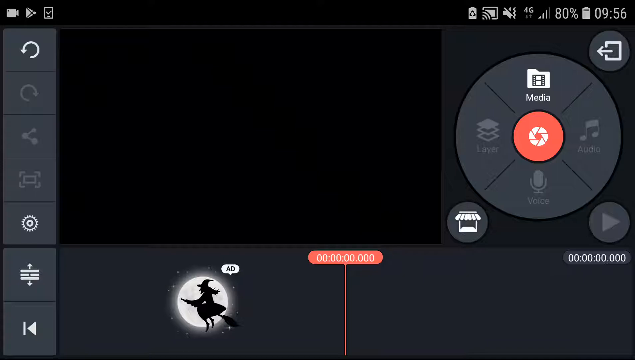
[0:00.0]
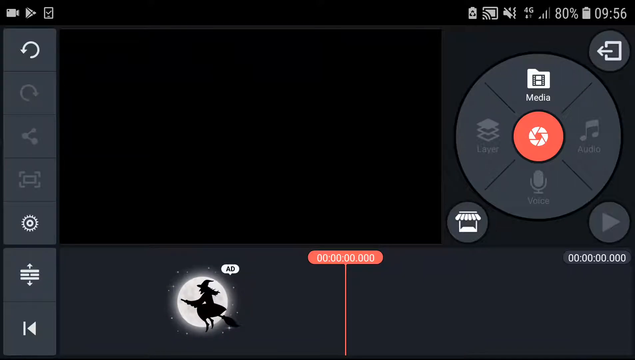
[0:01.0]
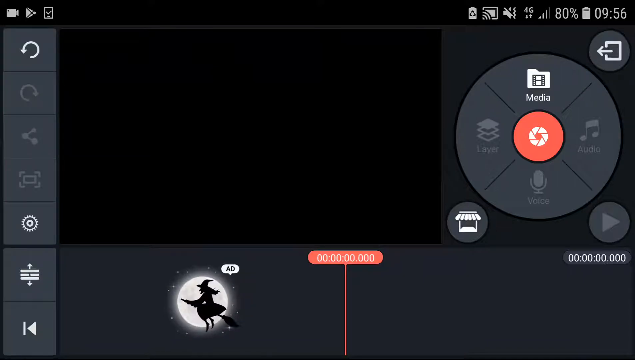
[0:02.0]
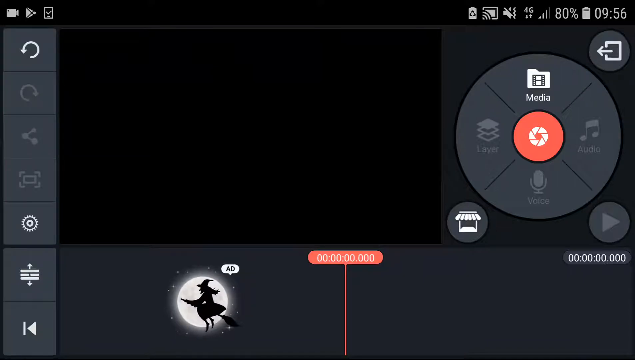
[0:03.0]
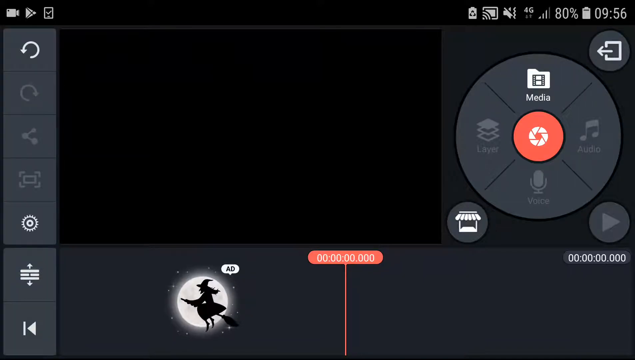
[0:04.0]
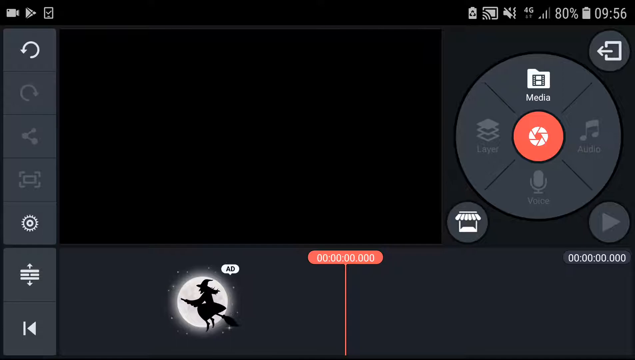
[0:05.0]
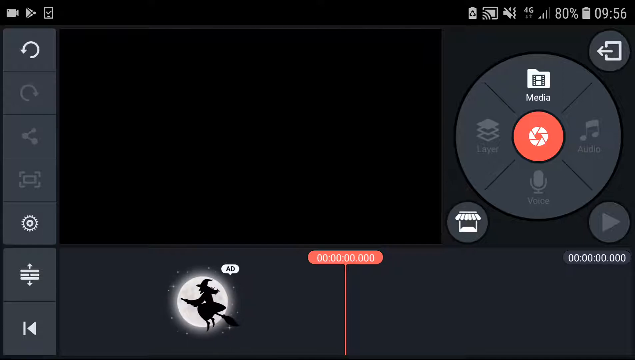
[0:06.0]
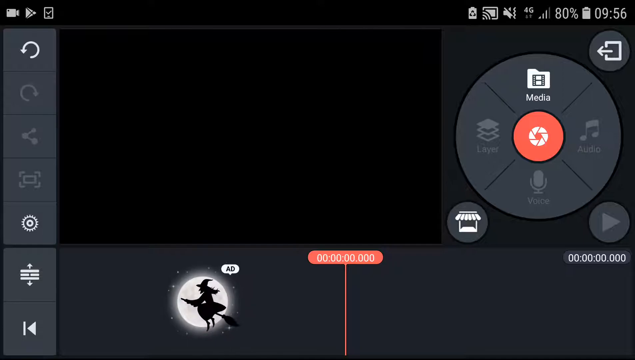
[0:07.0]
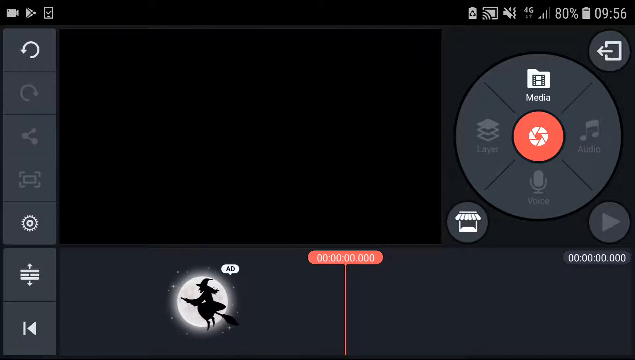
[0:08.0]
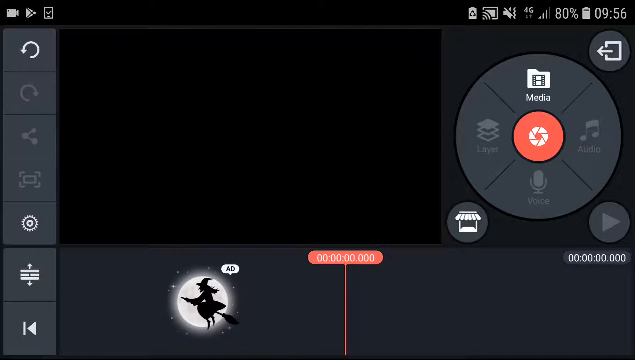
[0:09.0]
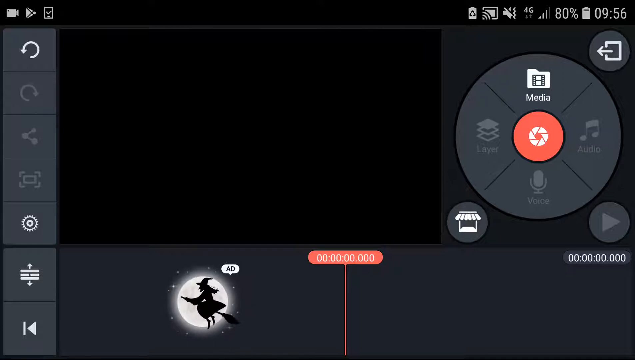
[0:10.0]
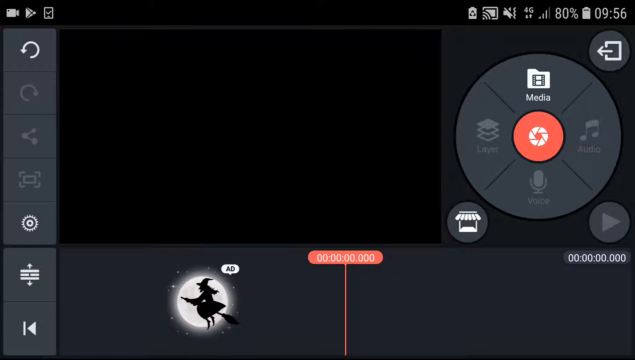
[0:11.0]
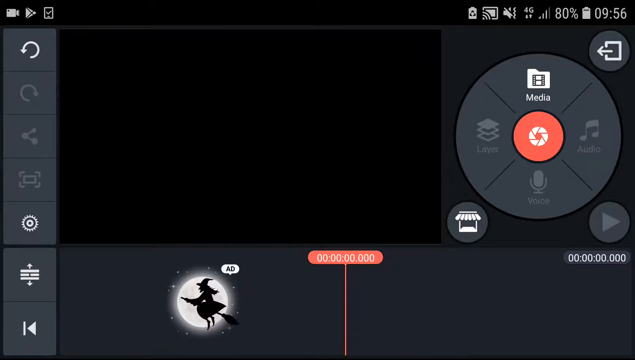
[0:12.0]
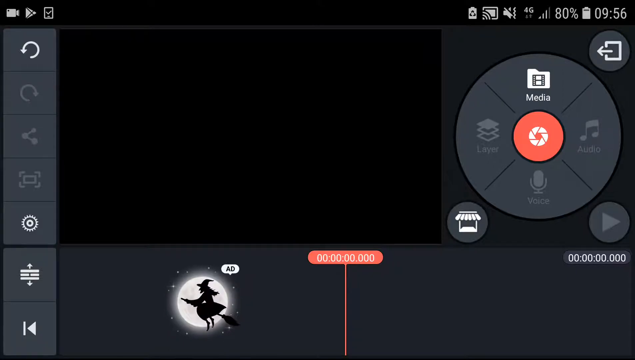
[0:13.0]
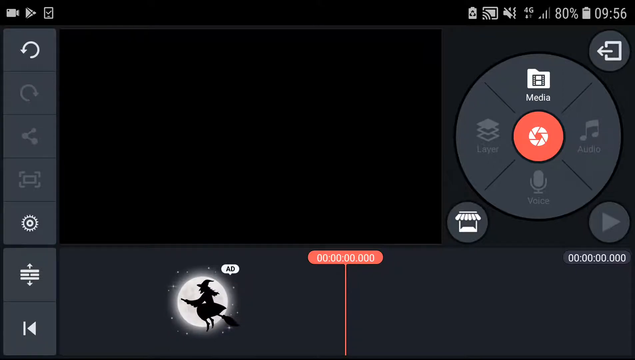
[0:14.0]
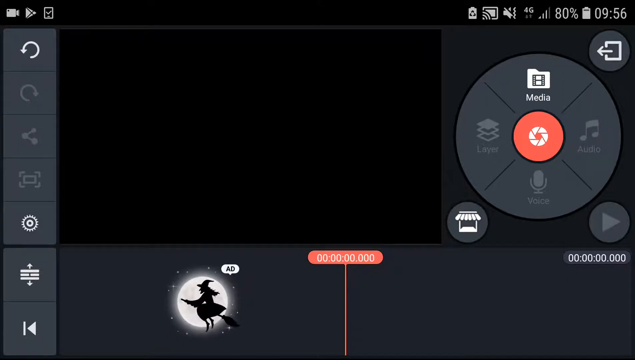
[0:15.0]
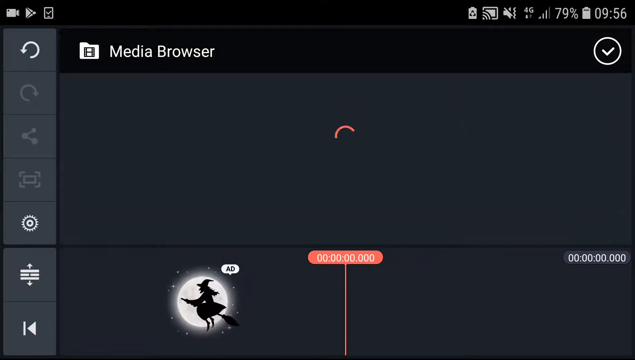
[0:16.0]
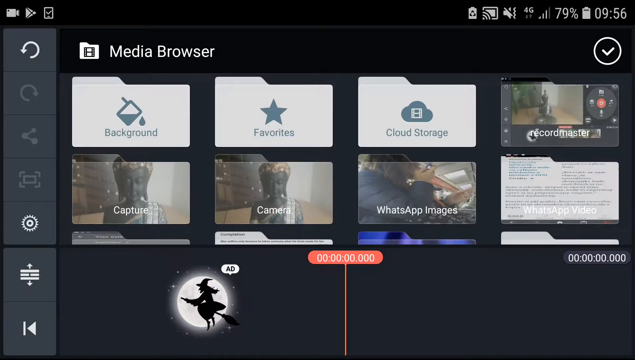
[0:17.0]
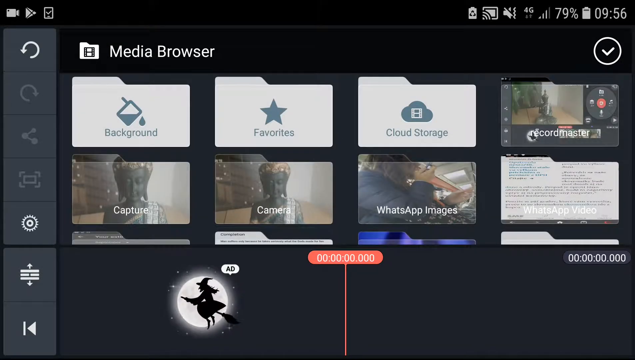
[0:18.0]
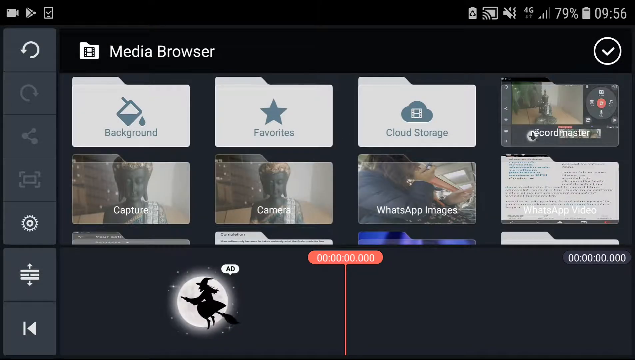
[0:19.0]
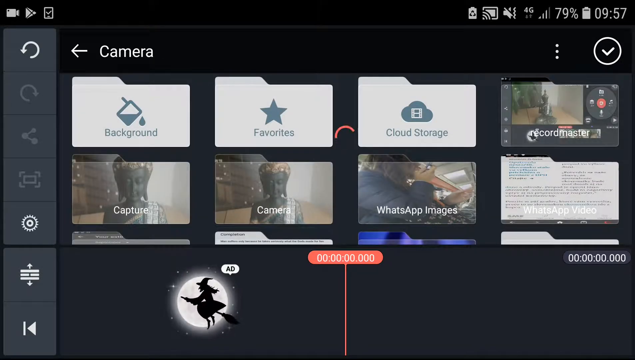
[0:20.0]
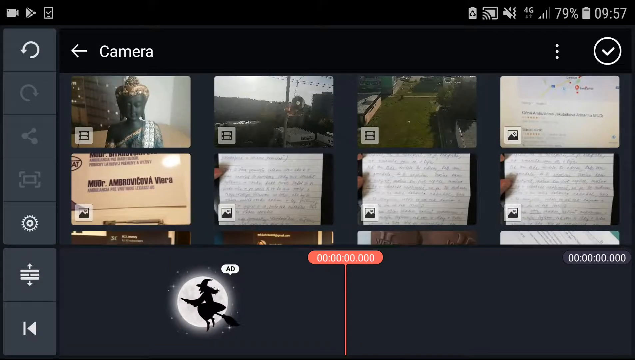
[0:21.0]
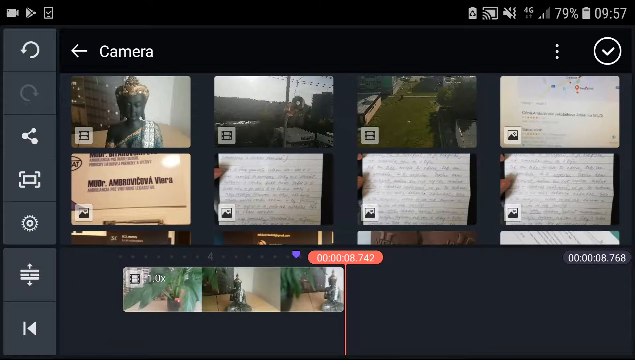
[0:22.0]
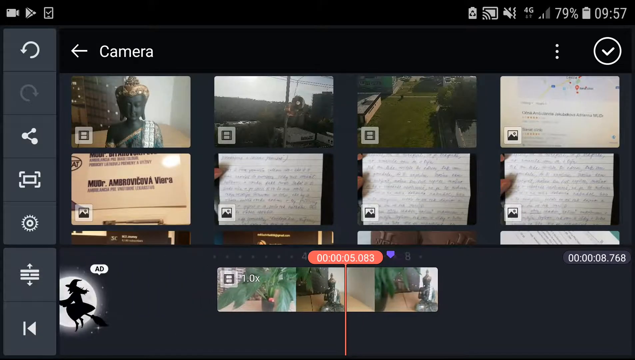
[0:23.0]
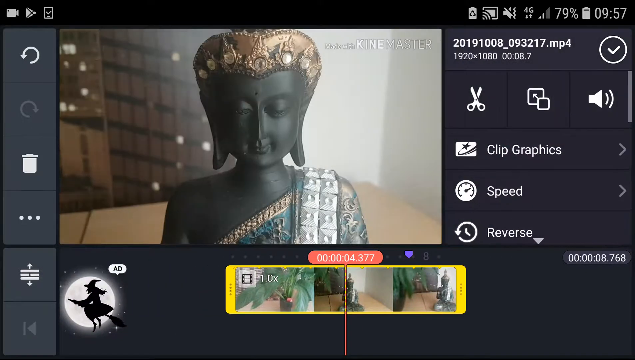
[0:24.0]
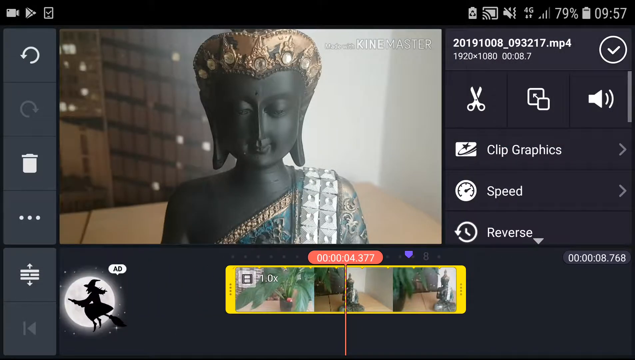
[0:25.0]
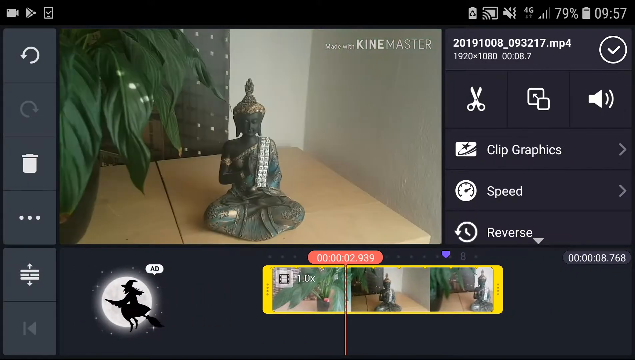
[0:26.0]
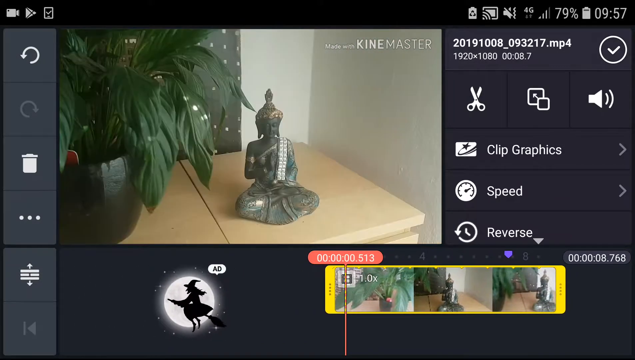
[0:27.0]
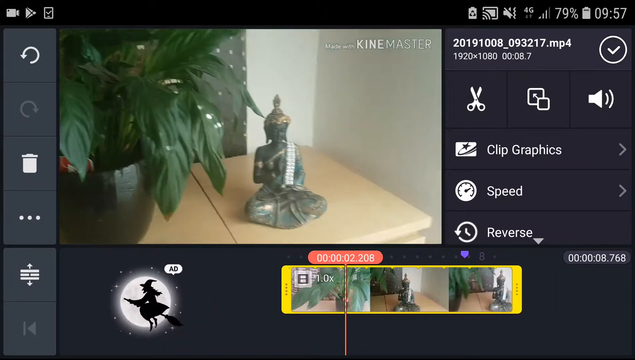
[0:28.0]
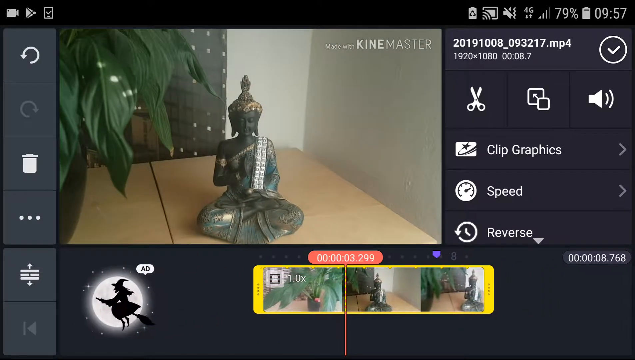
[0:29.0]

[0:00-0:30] The screen shows what looks like a movie, video or picture editor. There is a little witch at the bottom, and the screen says "media". There is an undo button for going back. The time reads 9:56 with 80 percent battery, and 4G looks like it is on. The user goes to the media browser and clicks on what looks like one of their videos, which shows an unidentified doll, something like a Buddha doll. They then appear to be trying to find a certain part of the video. There is a volume button, with the volume off, as well as what looks like a little store, a setting button and a video camera.